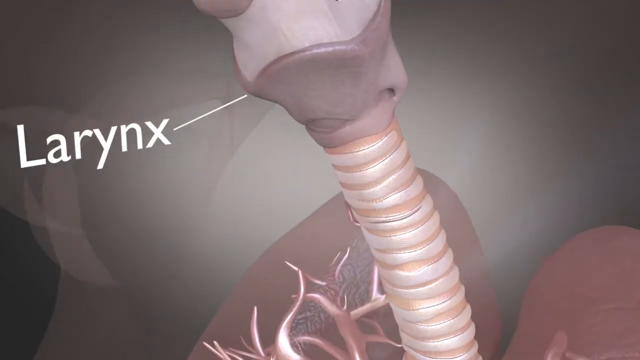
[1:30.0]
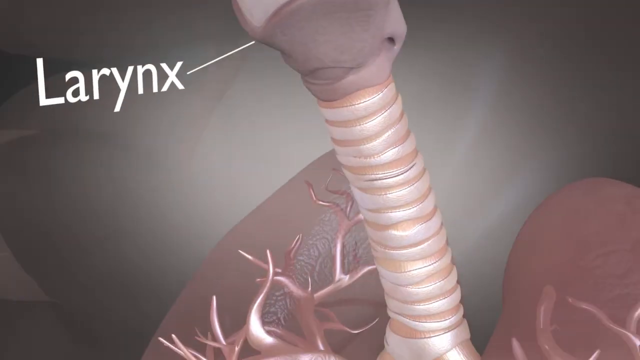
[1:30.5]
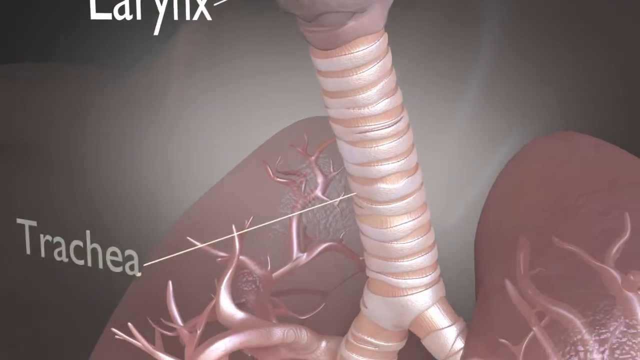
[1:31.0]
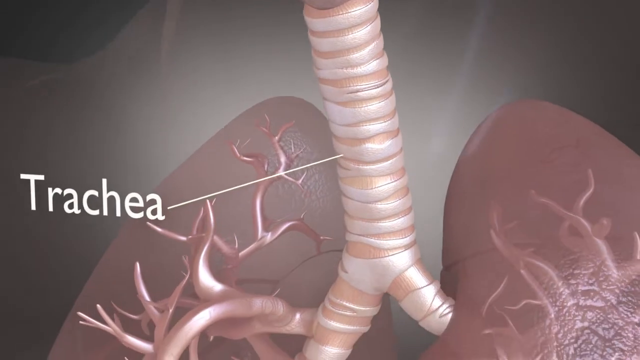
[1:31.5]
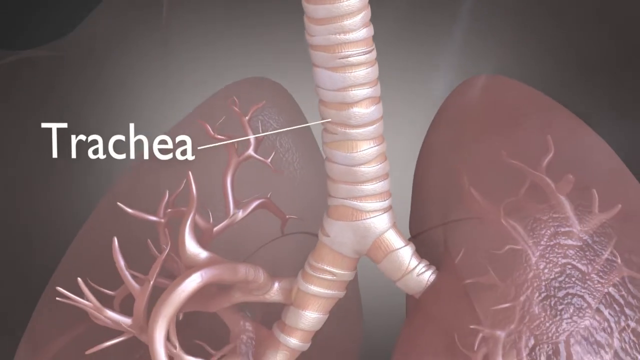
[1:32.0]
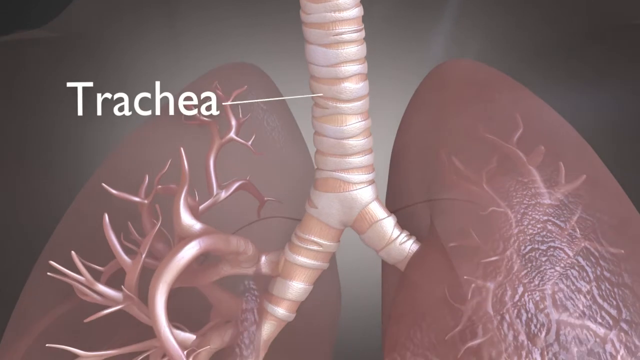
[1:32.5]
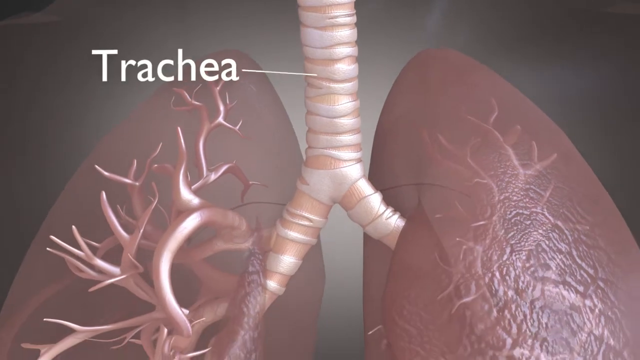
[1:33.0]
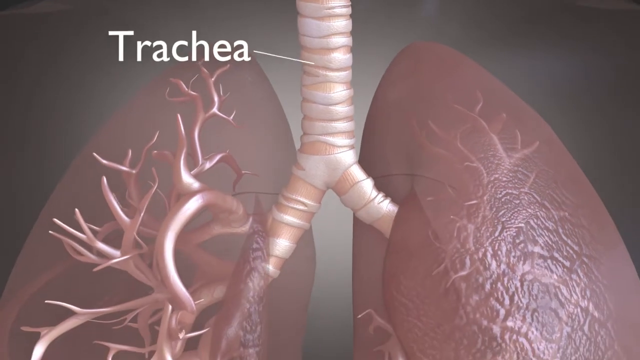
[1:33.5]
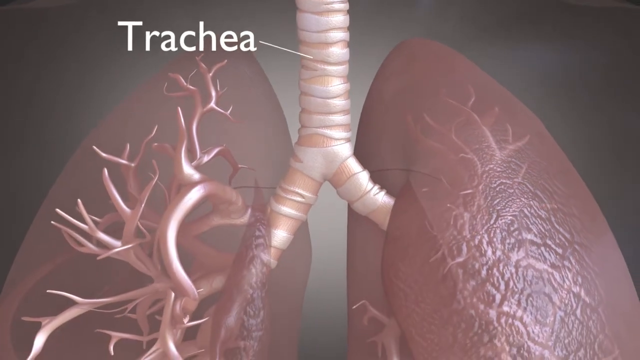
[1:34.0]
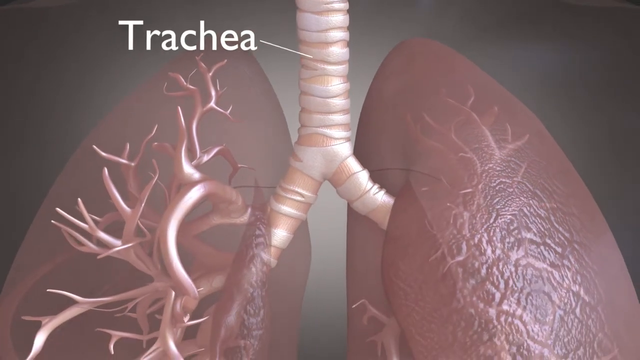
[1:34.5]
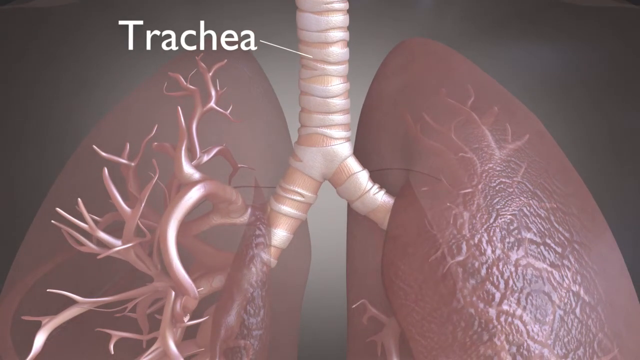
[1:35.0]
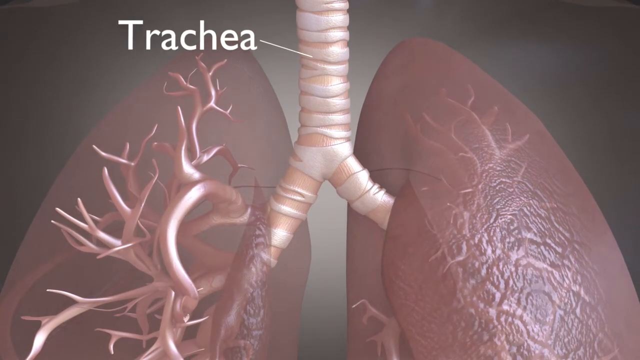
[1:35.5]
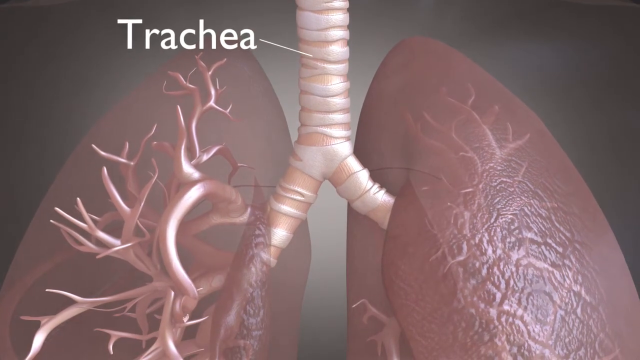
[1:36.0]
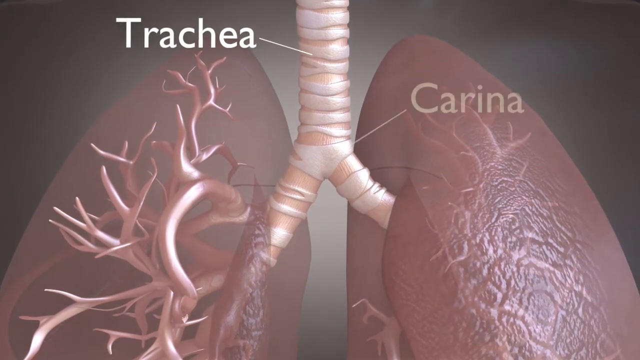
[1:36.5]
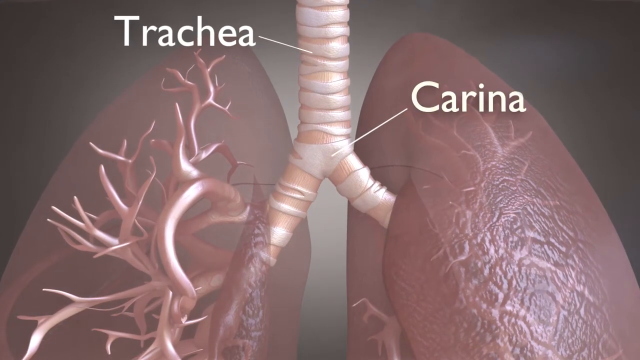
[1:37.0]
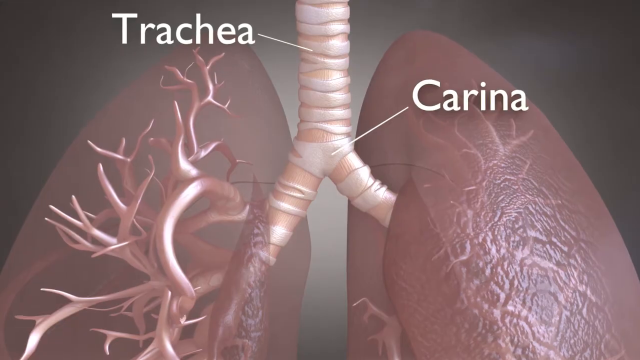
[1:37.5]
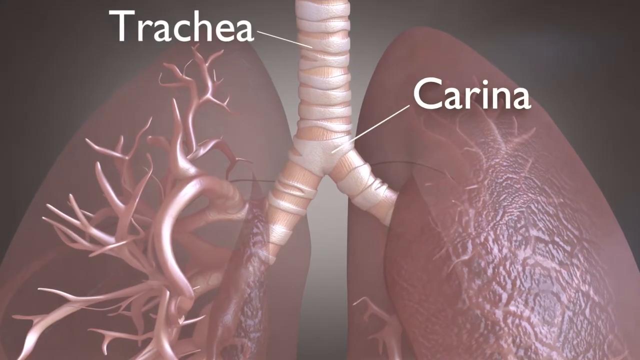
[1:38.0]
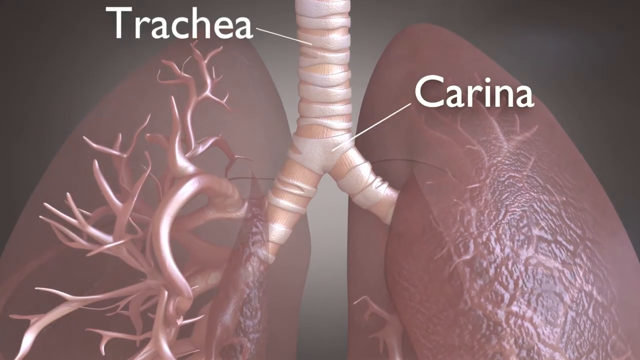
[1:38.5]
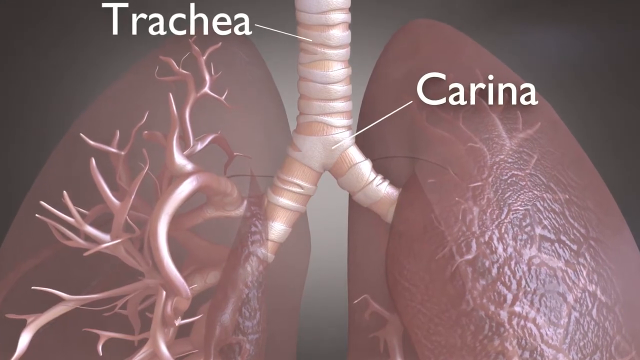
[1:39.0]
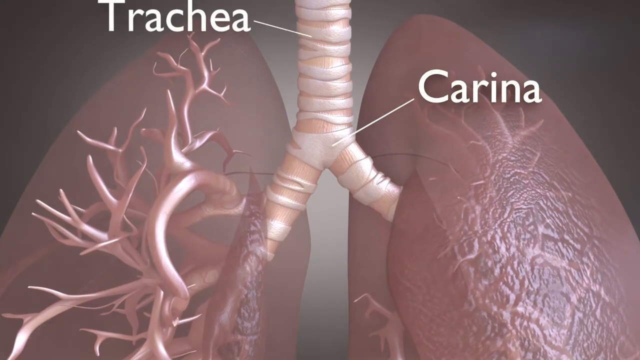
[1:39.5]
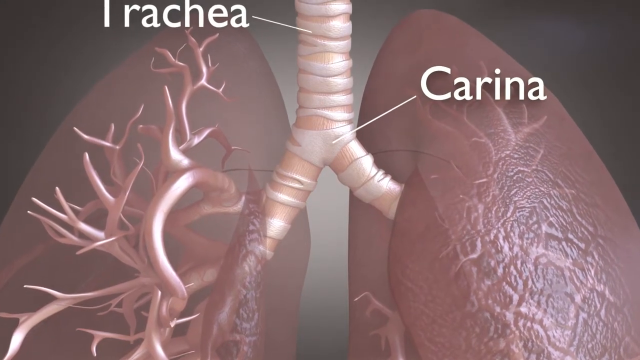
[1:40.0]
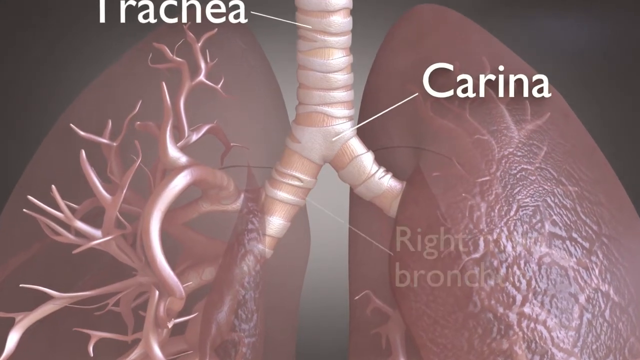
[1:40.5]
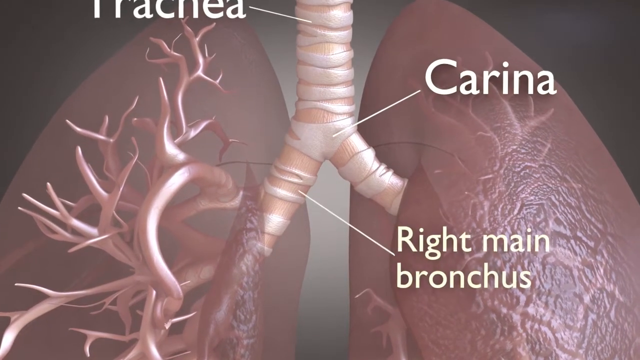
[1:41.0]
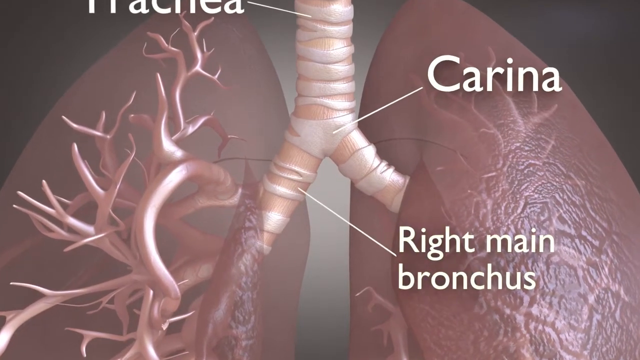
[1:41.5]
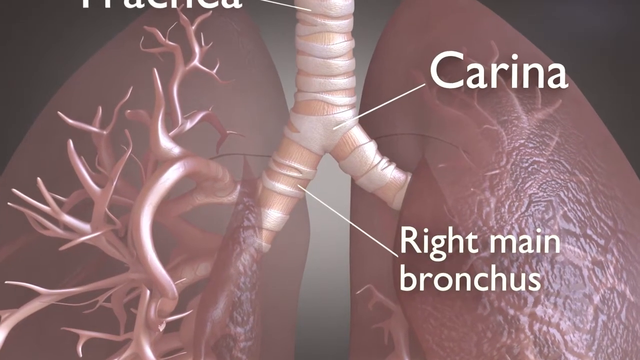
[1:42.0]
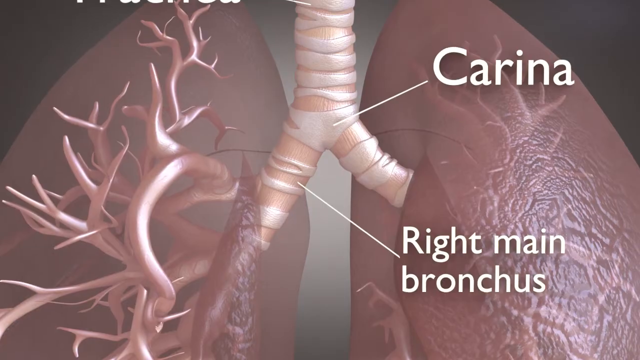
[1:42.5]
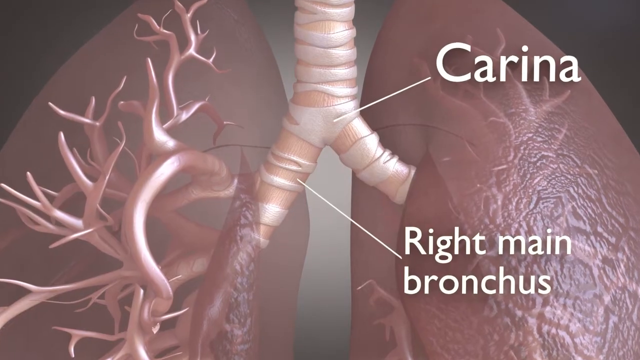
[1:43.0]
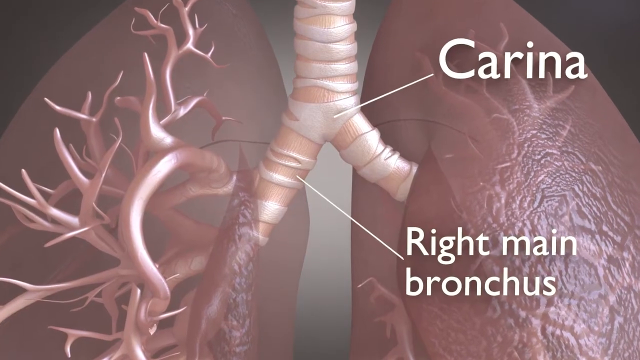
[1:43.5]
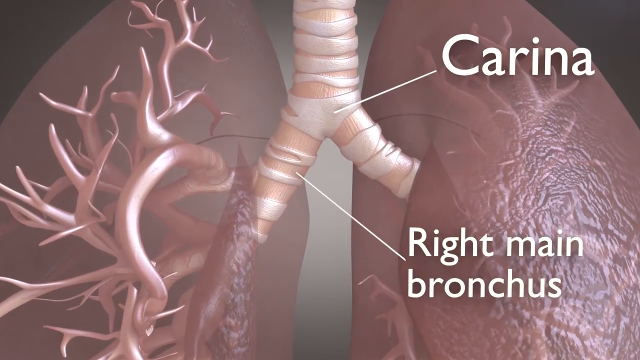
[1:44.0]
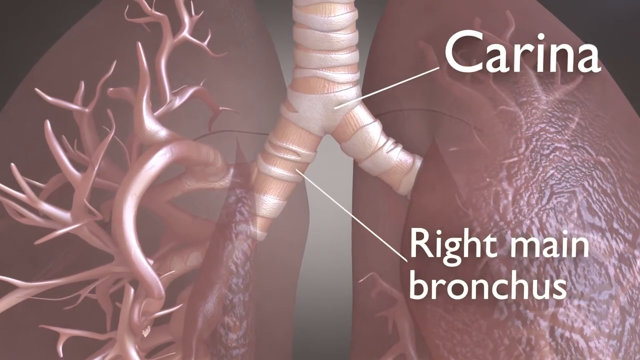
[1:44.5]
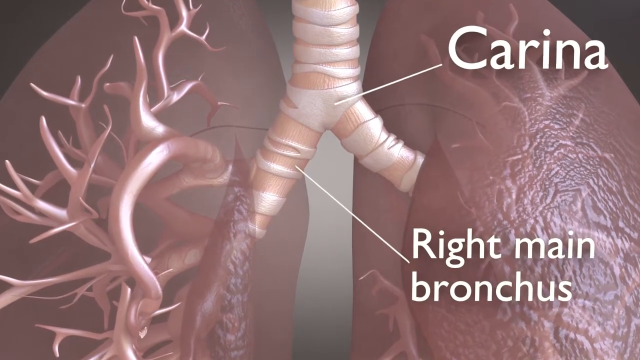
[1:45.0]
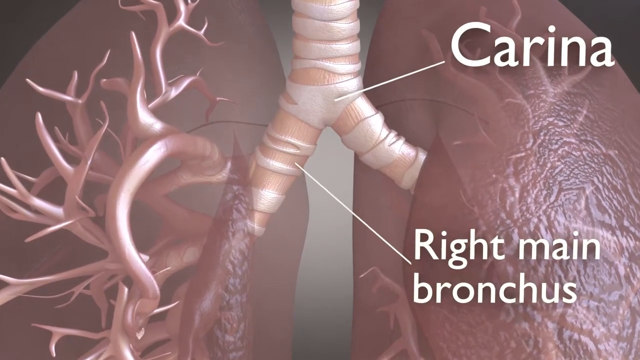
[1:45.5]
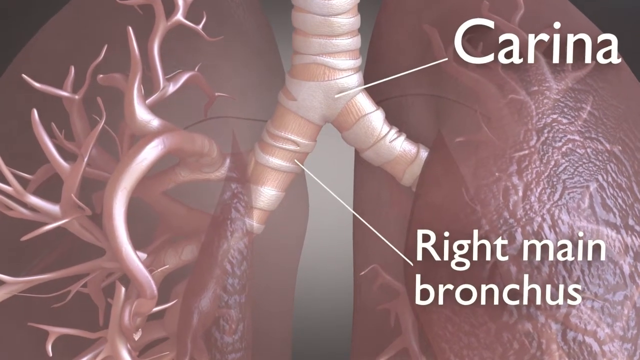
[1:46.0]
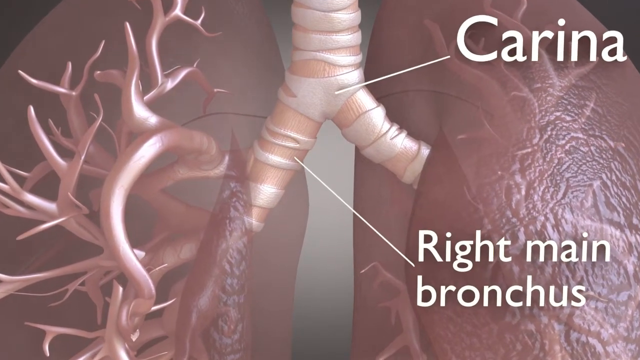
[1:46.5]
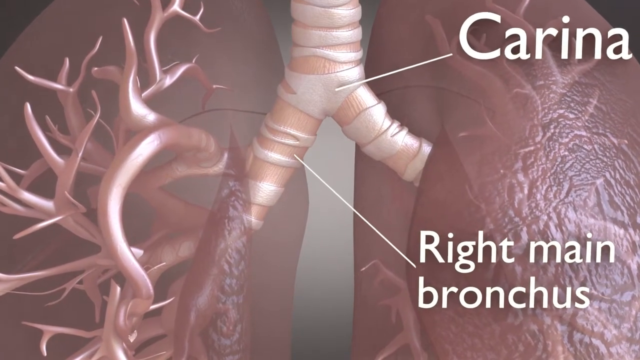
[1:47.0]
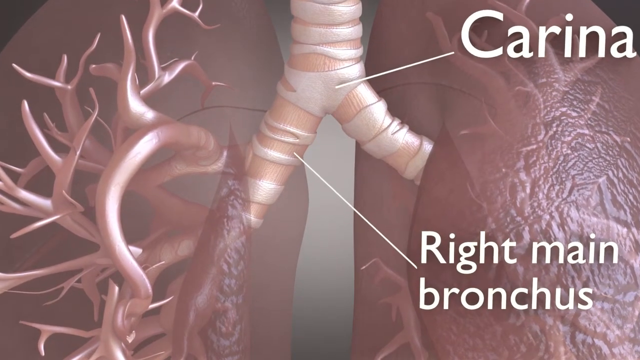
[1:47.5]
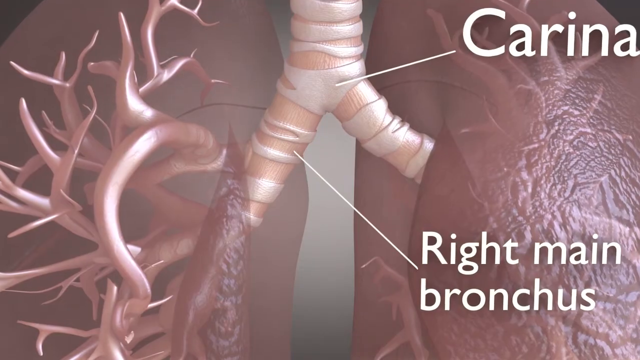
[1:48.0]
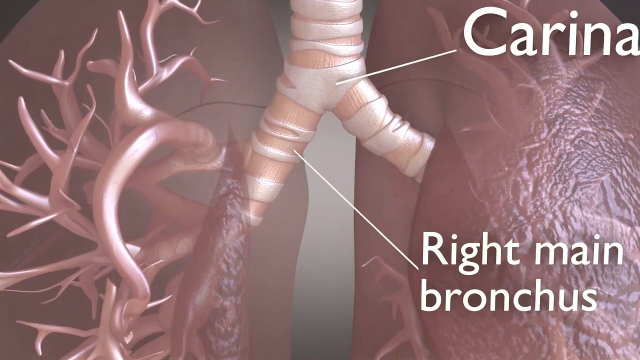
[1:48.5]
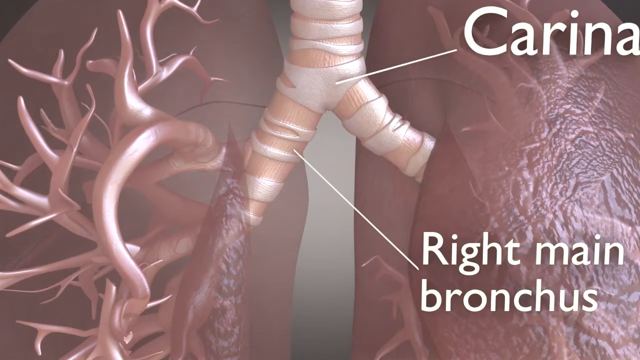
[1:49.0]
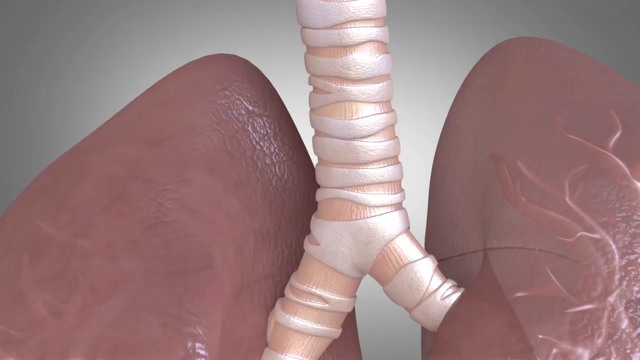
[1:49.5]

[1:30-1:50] An illustrated graphic of the larynx, esophagus and lungs shows an interior view of the human respiratory system. The camera moves from the larynx, labeled on the left, down to the lungs. The trachea is labeled, and the lungs appear pink. On the left side, the bronchi or veins within the left lung are visible. The word "Carina" appears on the right with a white line pointing to the division in the trachea, where the bronchial tubes divide, one side going to the left lung and the other to the right lung. At the bottom of the screen the words "Right main bronchus" appear with a white line pointing toward the one on the right as the camera pulls in closer to the model. Briefly at the end, the camera focuses on the tops of the lungs.